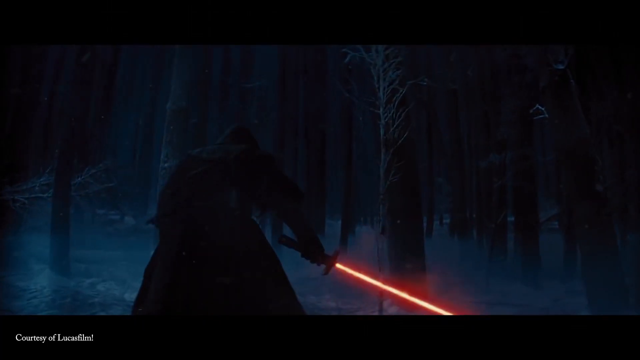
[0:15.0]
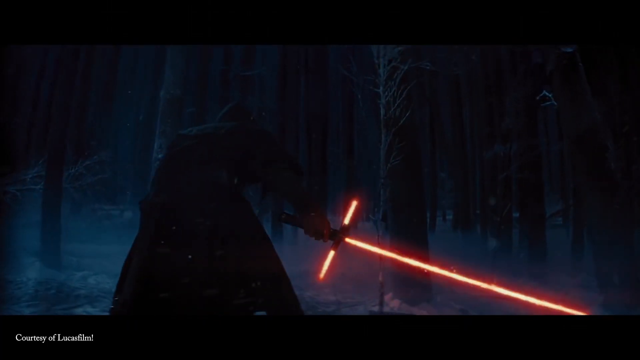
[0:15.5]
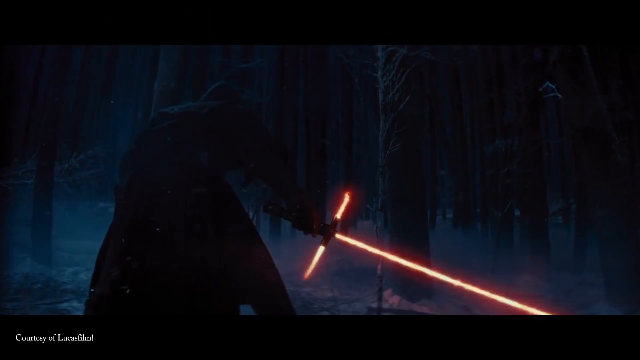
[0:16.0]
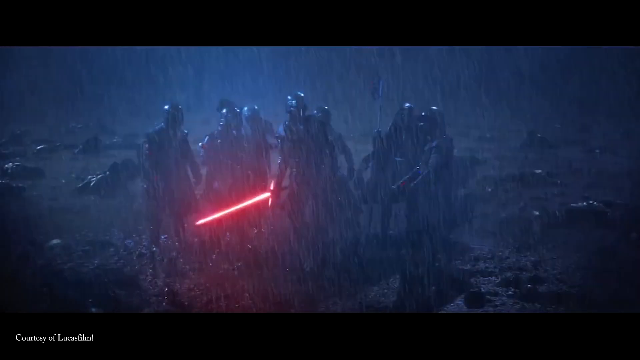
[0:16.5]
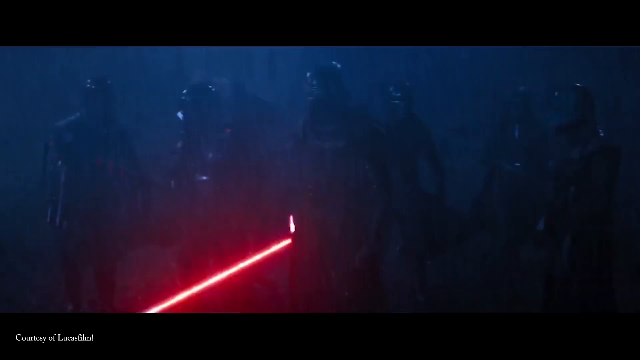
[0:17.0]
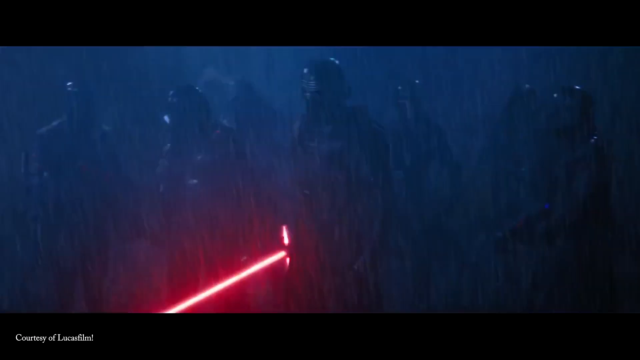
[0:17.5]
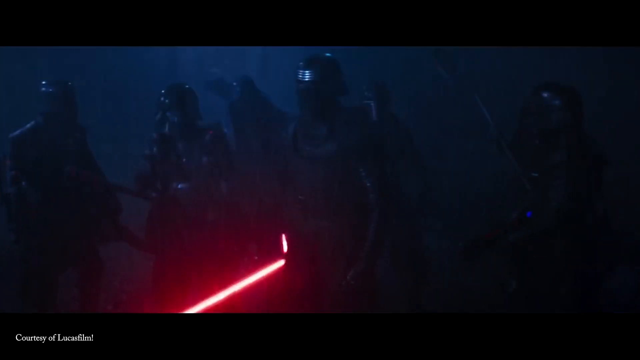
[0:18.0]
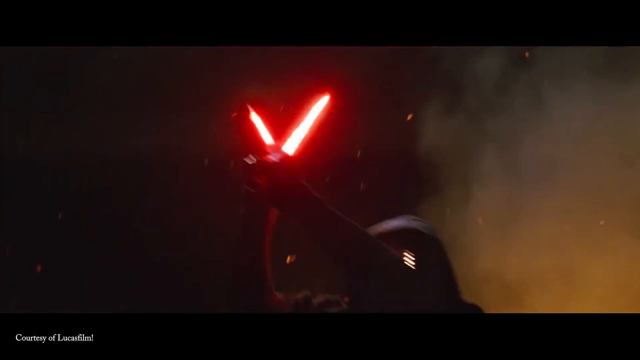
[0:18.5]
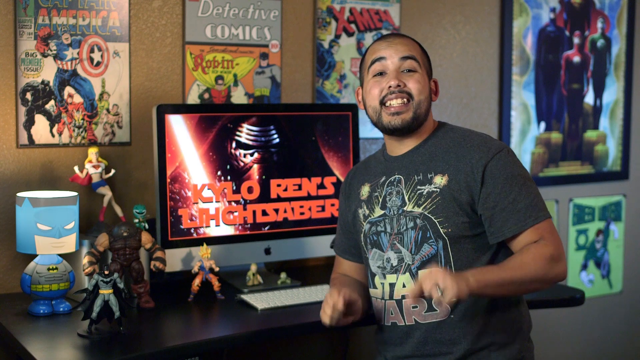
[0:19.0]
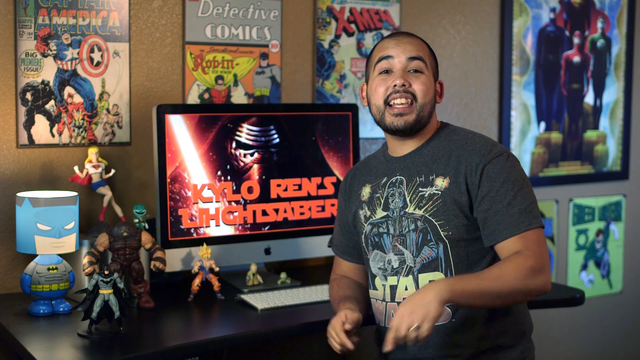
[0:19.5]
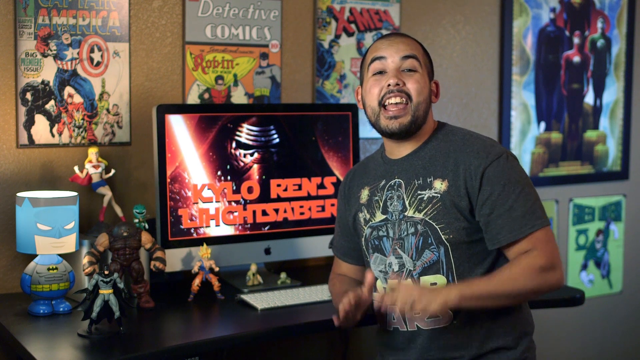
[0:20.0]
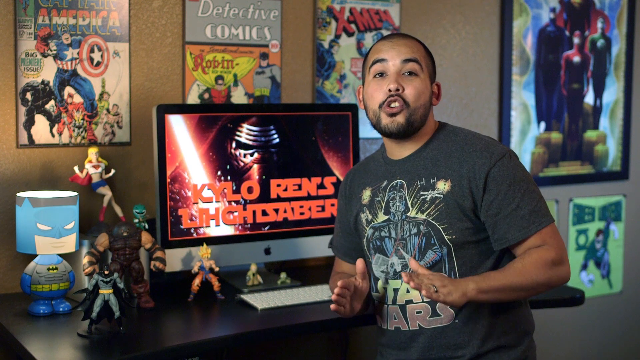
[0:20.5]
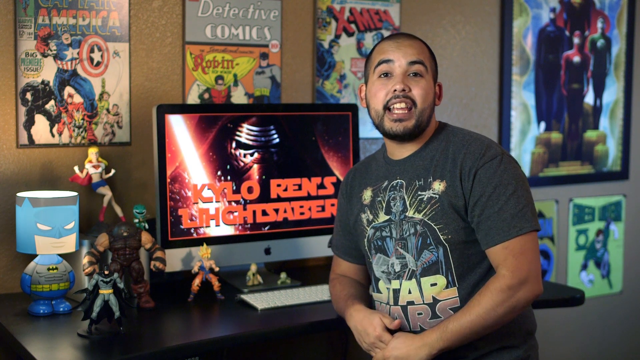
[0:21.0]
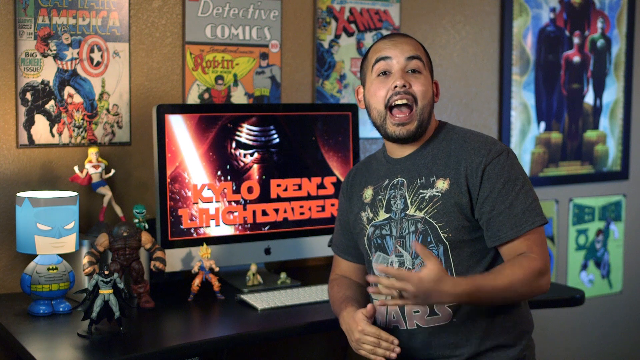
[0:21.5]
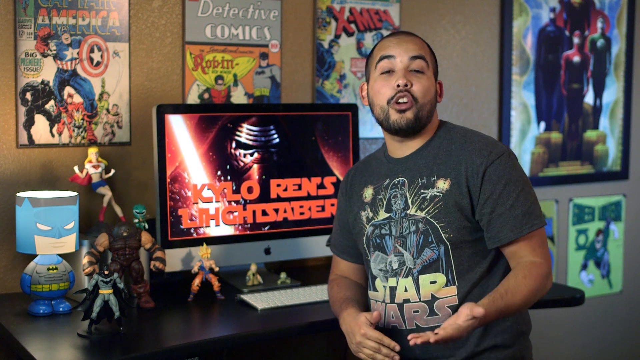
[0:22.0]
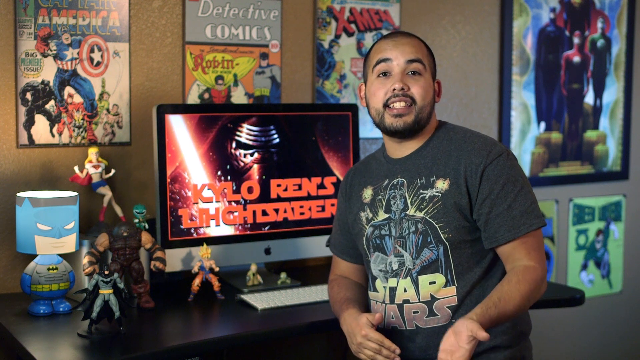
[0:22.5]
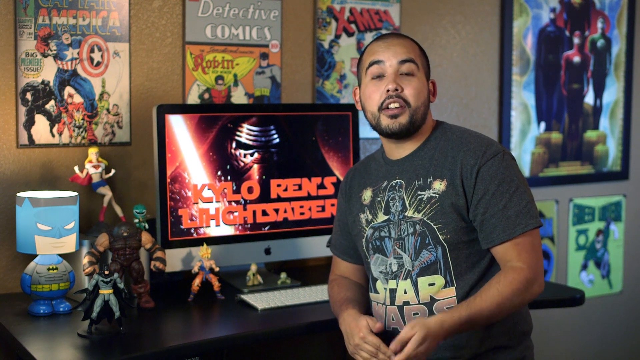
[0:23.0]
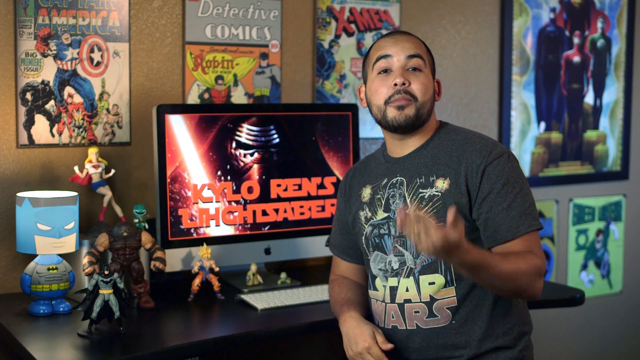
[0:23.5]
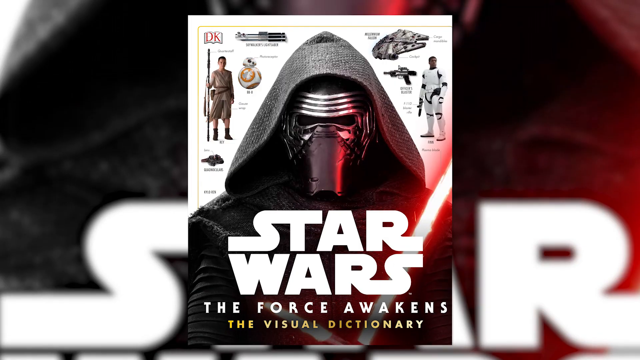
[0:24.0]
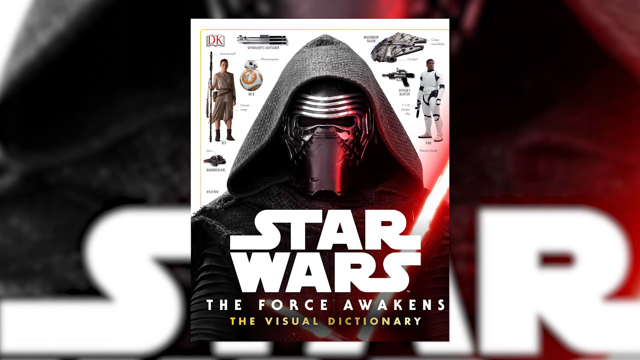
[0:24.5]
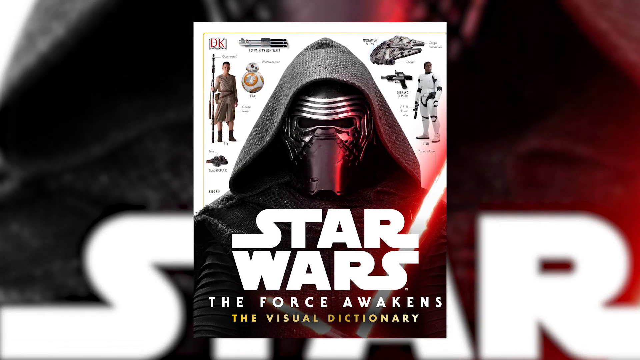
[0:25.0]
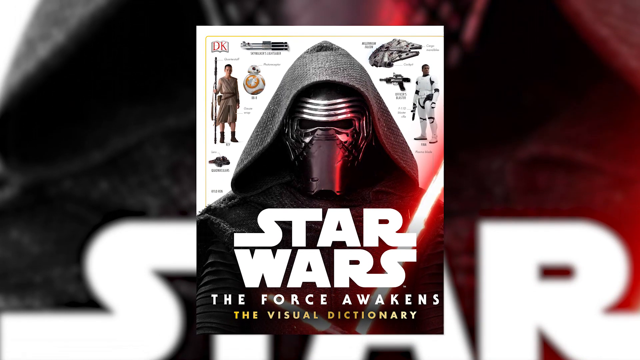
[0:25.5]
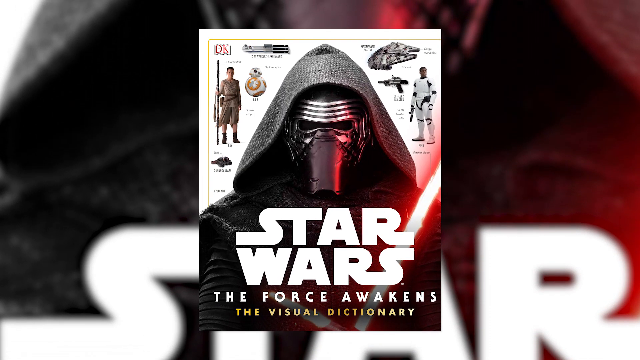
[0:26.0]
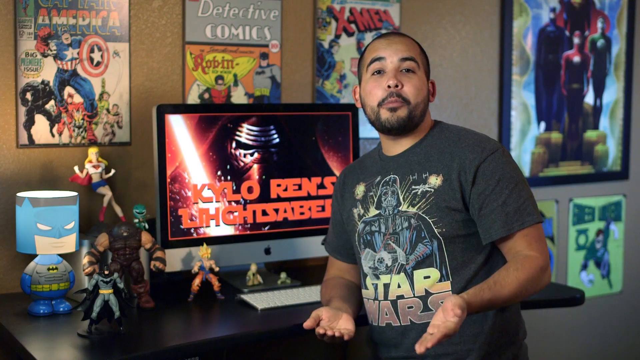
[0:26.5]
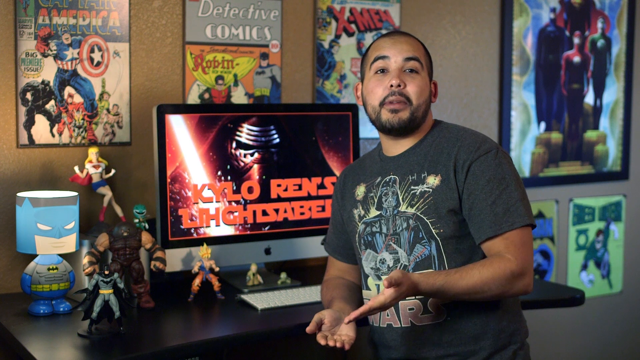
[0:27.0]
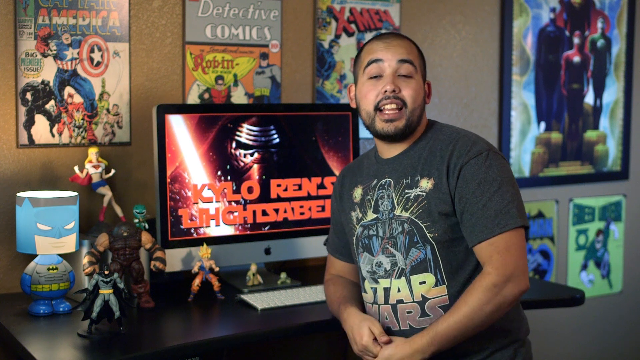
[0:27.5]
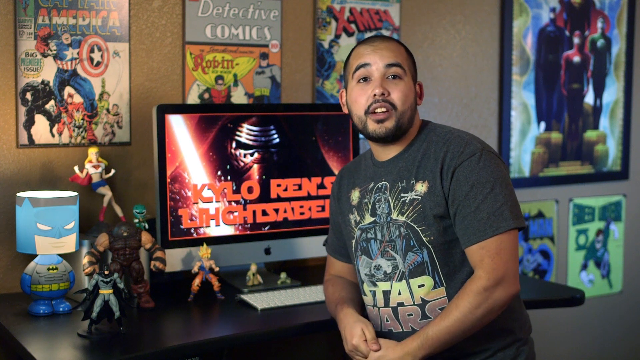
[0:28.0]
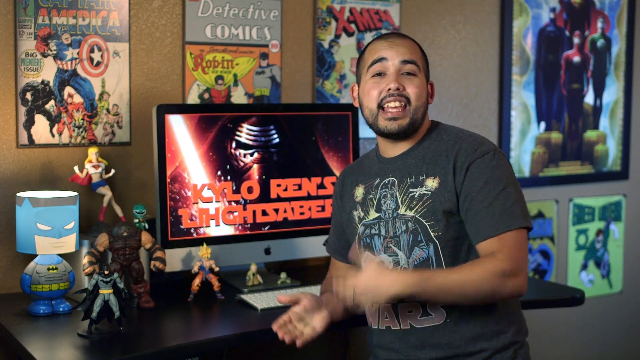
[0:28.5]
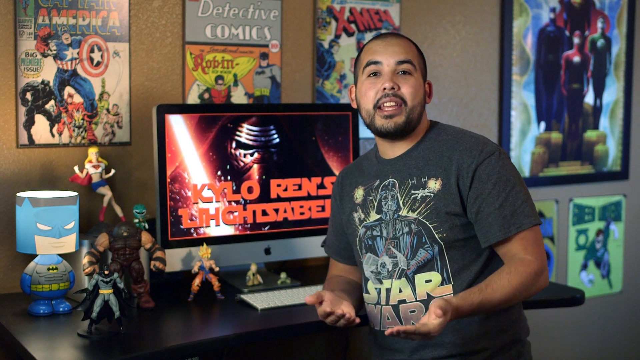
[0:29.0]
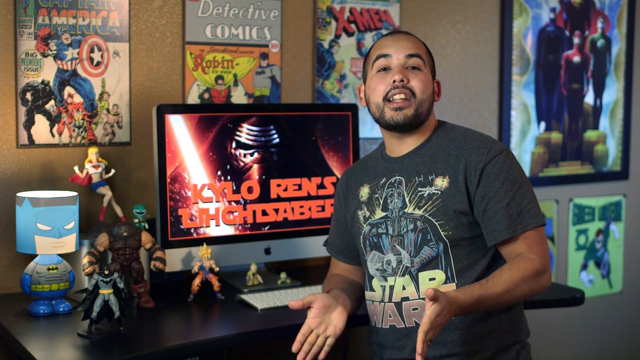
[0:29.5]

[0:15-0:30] This YouTube video, titled "How Kylo Ren's Lightsaber Works," appears to have been uploaded by Variant Comics, as indicated by the banner in the top right of the video: a circle filled with blue containing a blue badge with a V and a white outline. A man in a black Star Wars shirt with Darth Vader on it gestures while seated in front of an Apple computer. On the monitor is an image of Kylo Ren with his lightsaber activated, with red text over him that reads "Kylo Ren's lightsaber." Framed, enlarged comic book covers hang on the background walls of the office space or workspace. Interspersed with shots of the narrating man are images from a Star Wars film showing Kylo Ren and his soldiers in a dark environment, with his red lightsaber activated, as well as an image of the Star Wars Visual Dictionary.